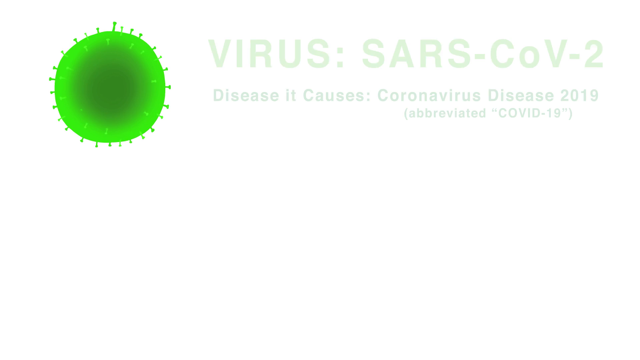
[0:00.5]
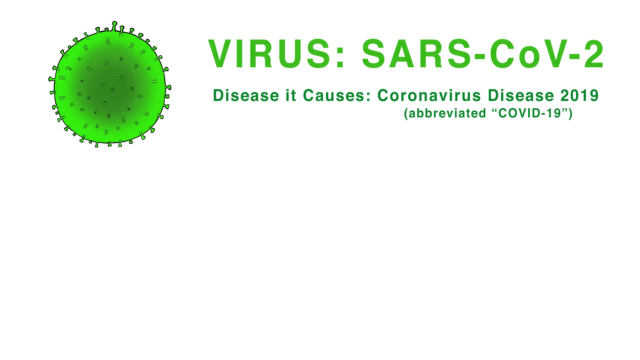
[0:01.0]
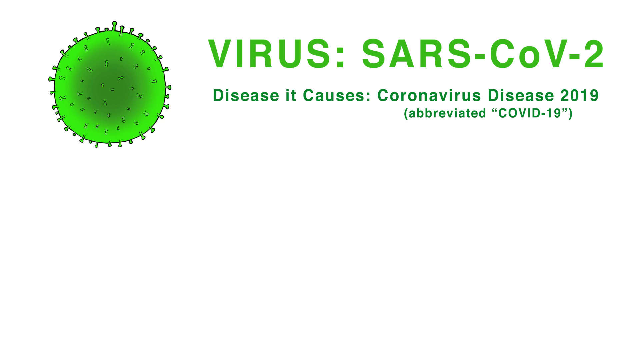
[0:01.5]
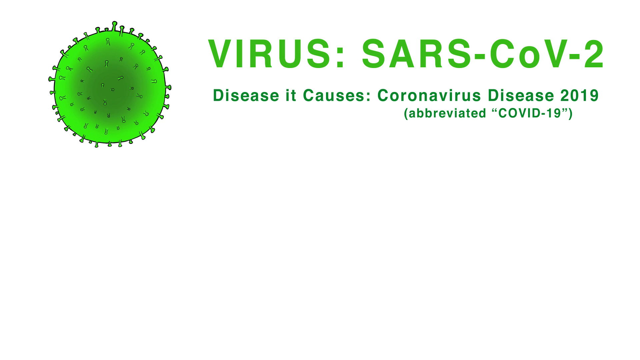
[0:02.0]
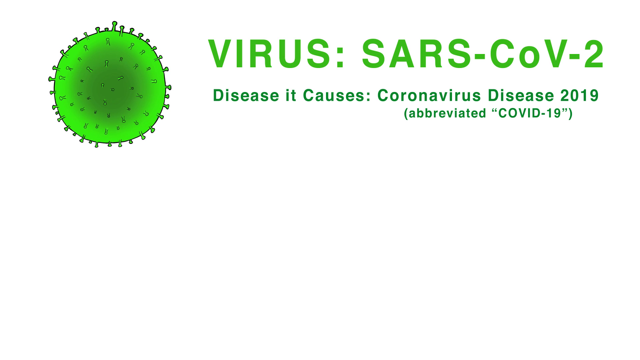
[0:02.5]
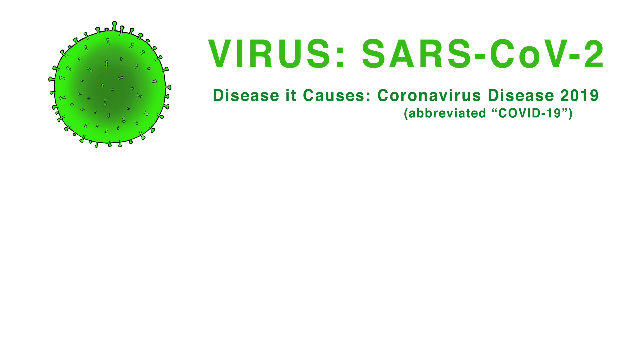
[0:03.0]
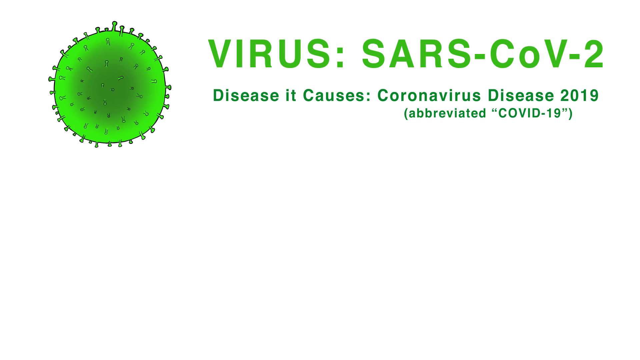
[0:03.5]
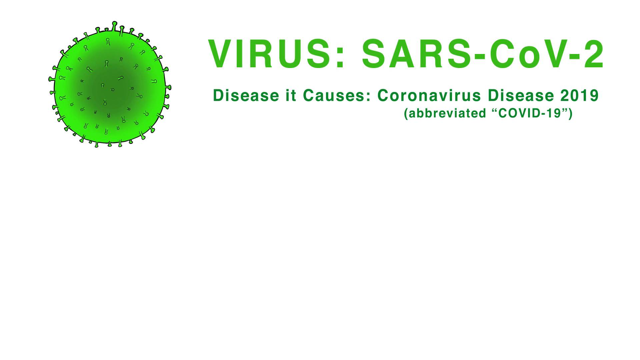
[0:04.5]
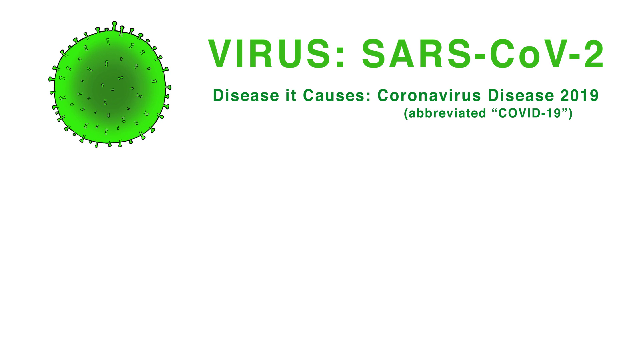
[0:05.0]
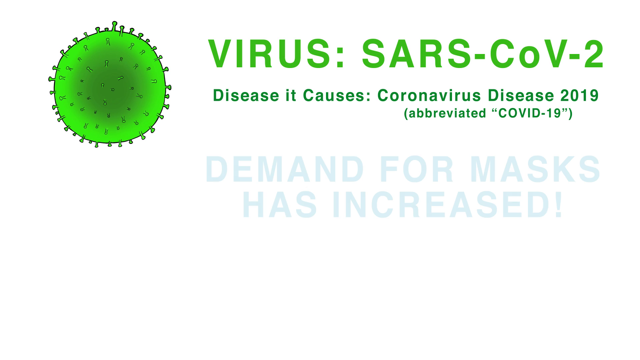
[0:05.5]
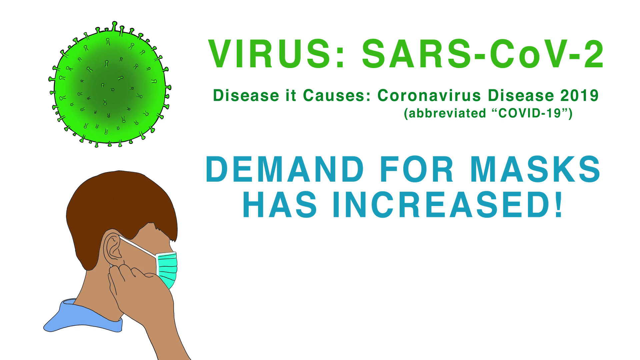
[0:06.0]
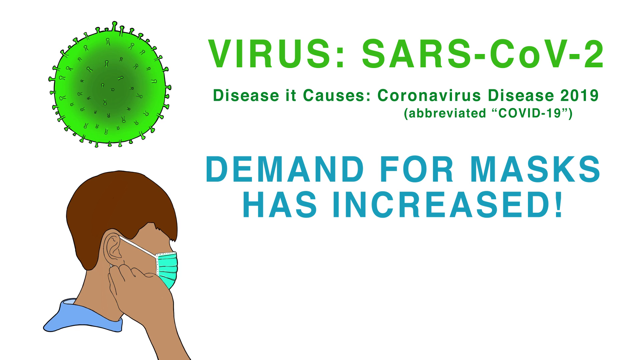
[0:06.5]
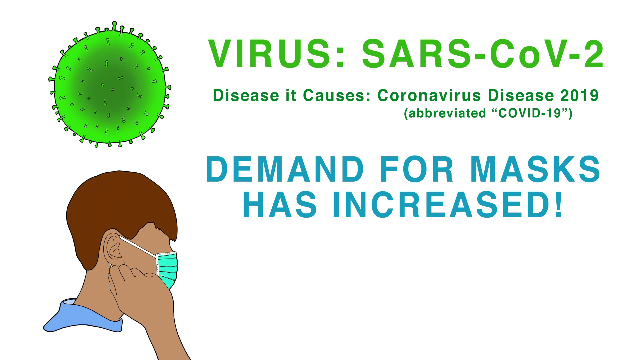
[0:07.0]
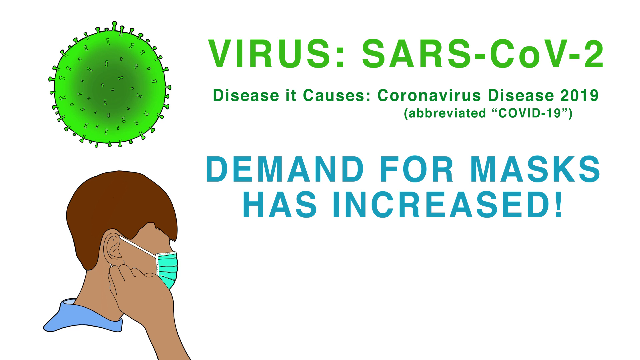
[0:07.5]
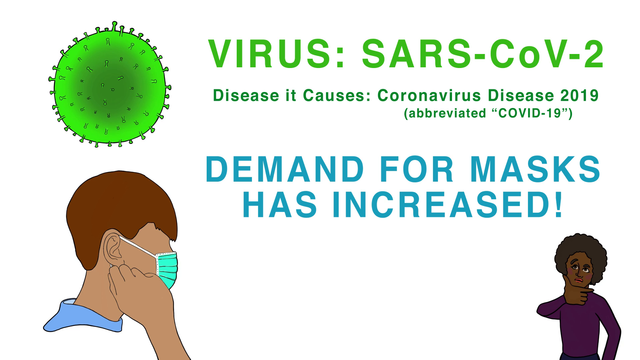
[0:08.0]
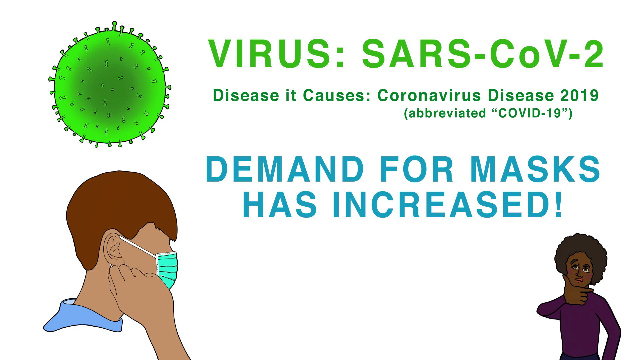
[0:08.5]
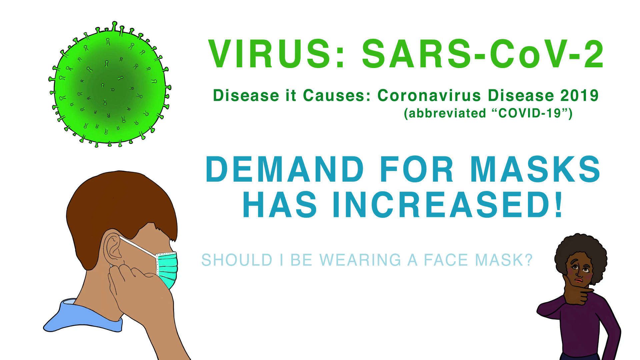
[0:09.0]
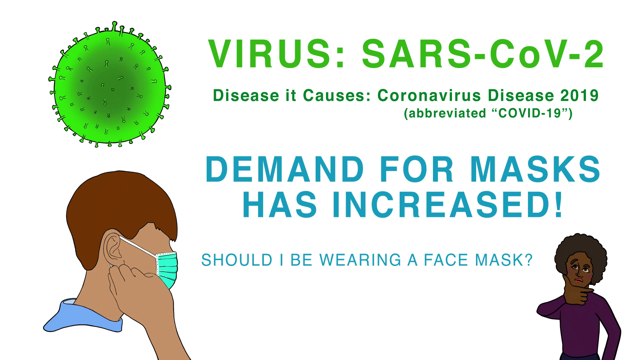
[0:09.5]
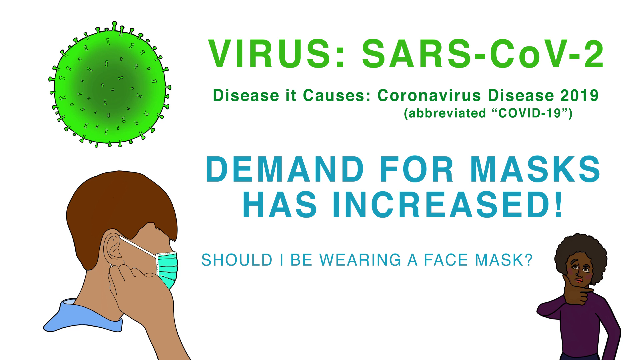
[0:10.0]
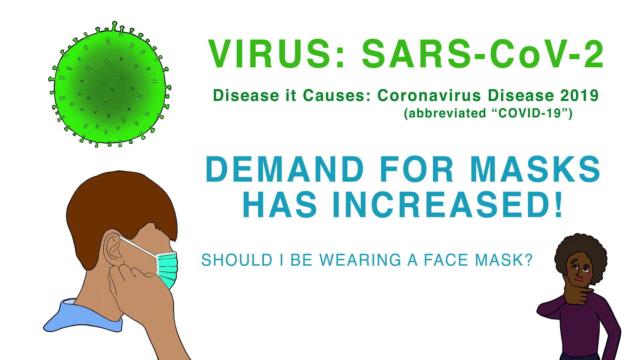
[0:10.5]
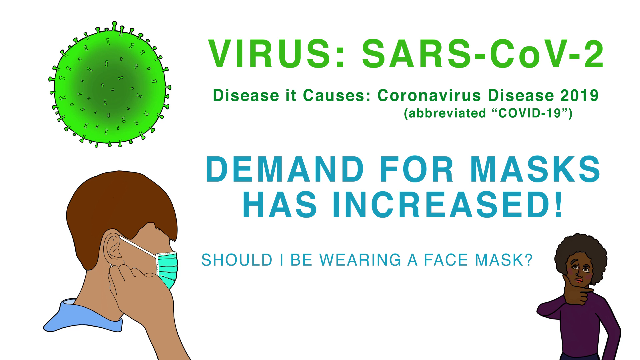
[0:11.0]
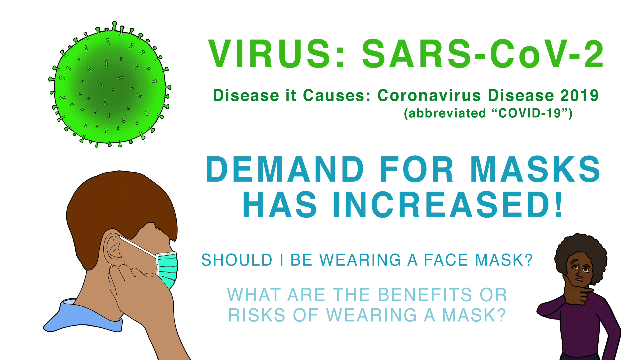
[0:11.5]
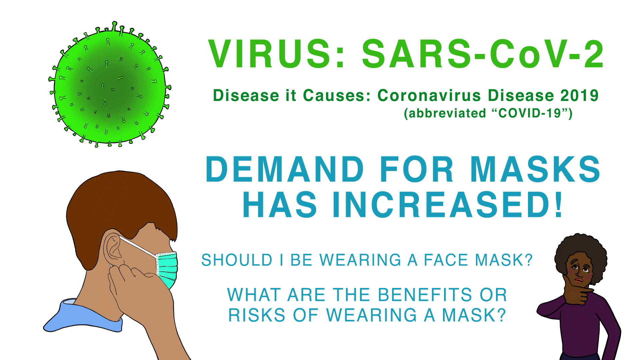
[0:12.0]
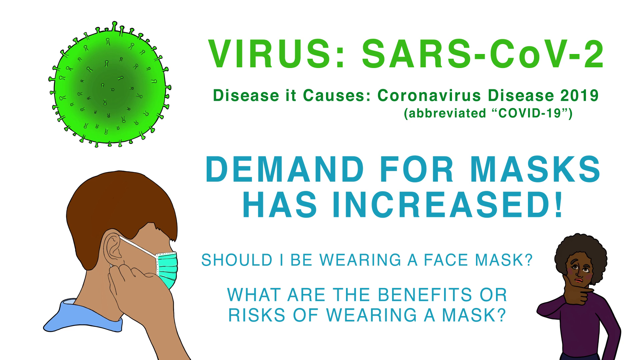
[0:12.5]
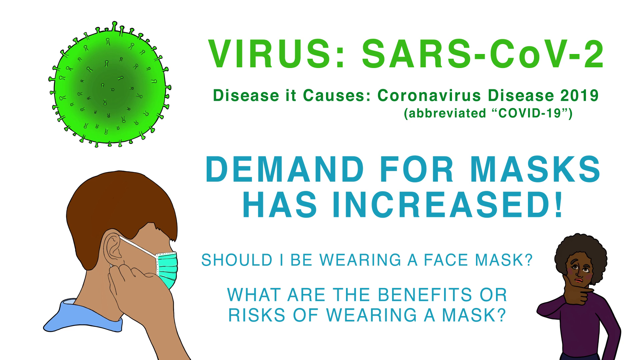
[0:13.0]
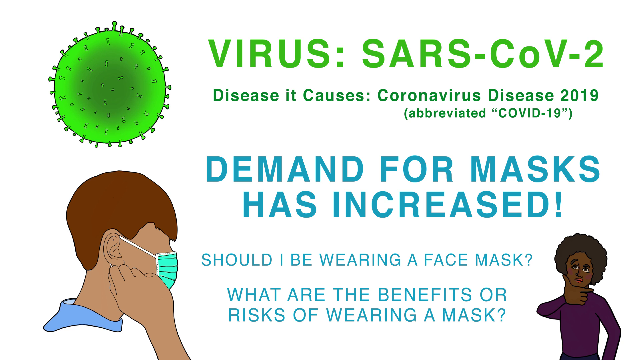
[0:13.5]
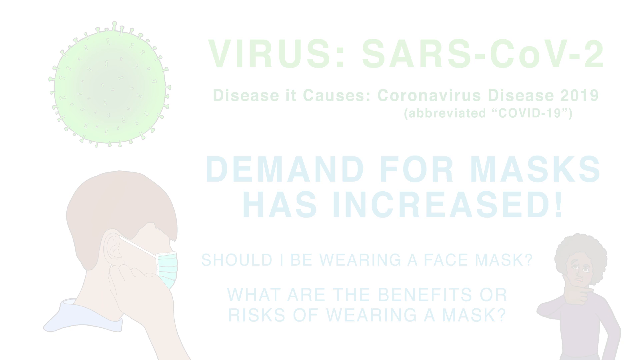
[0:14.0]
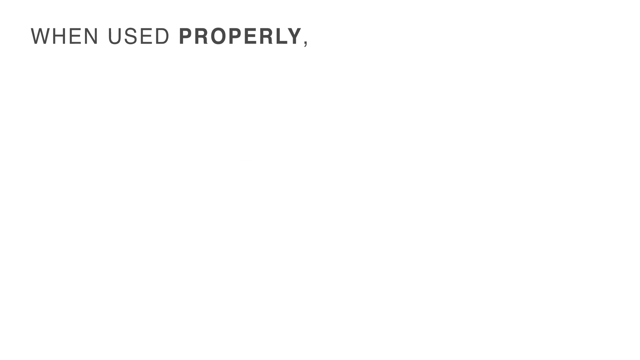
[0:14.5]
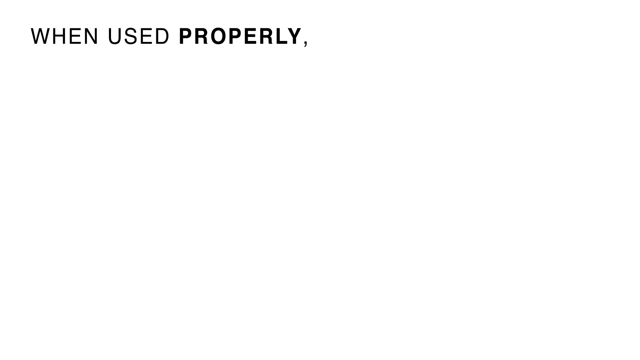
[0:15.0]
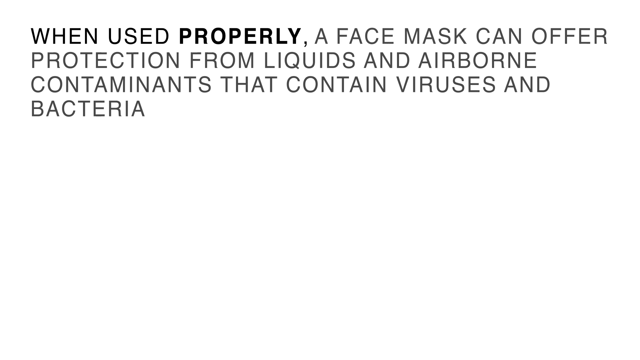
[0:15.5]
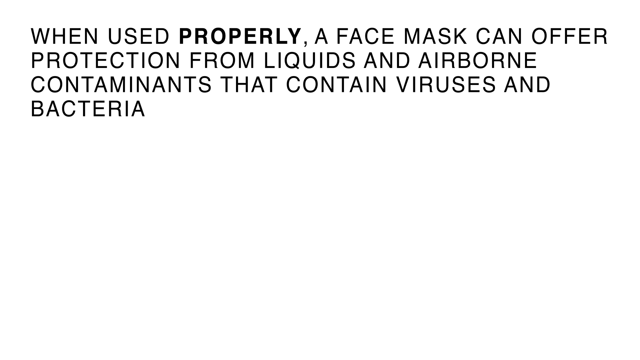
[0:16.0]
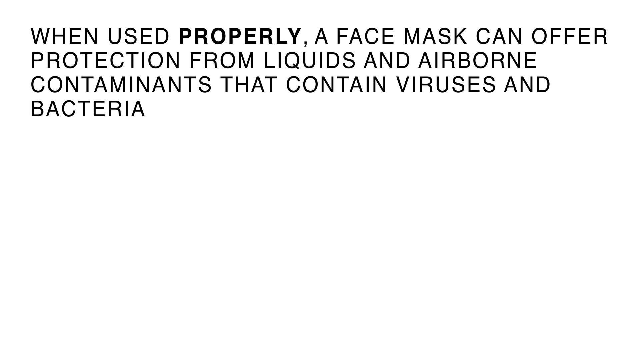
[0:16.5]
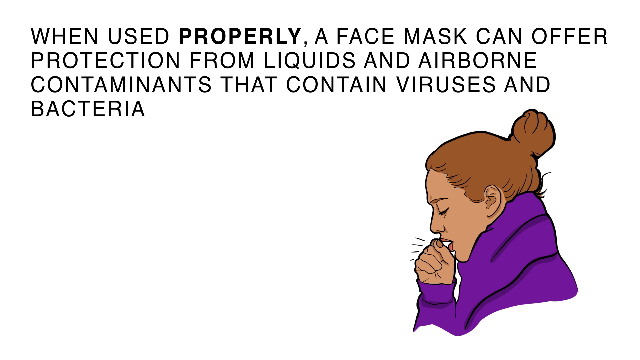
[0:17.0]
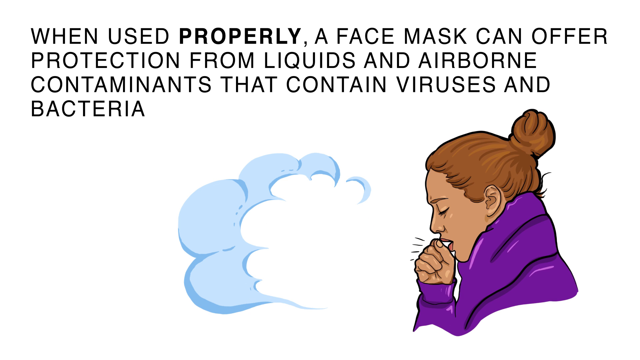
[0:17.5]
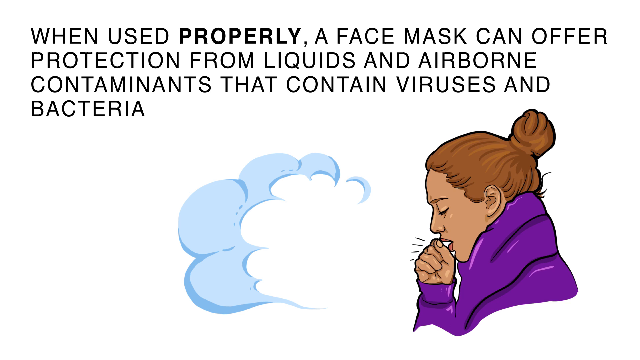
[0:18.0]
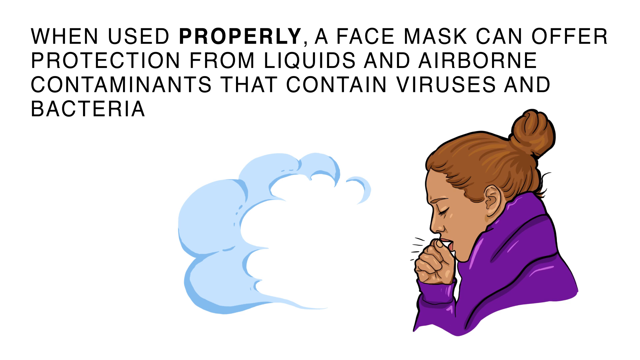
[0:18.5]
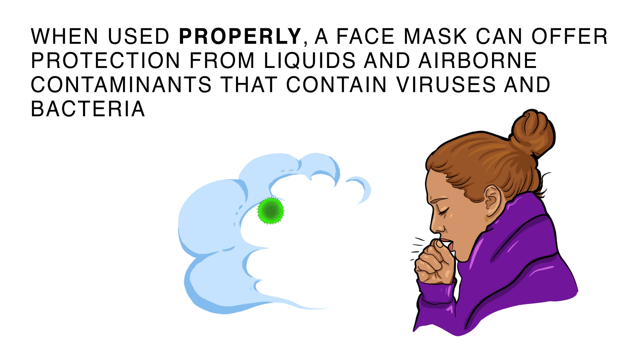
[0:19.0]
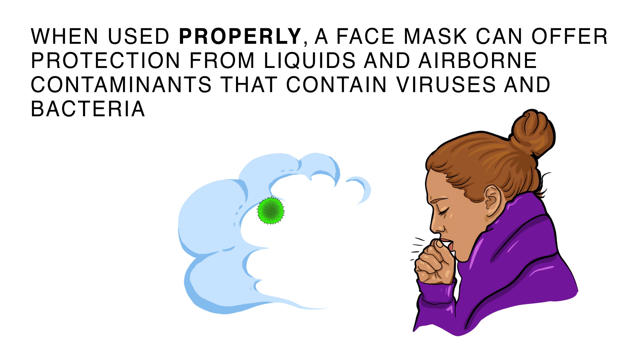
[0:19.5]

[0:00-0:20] The video begins with a white screen, then a green image and green text appear. The image appears to be a germ; it is drawn and circle-shaped. The text reads "Virus SARS-COV-2 Disease it causes Coronavirus disease 2019 Abbreviated COVID-19". Next, blue text and an image appear: the image is a profile of a person with brown hair and light brown skin wearing a medical face mask, and the blue text reads "Demand for masks has increased." Below that, another image and text appear: a dark brown-skinned person with an afro hairstyle has their hand on their chin as if questioning, with text reading "Should I be wearing a face mask?" More blue text below that reads "what are the benefits or risks of wearing a mask?" The video then transitions to a white screen with a paragraph of black text about the proper usage of face masks. Below it is an image of a woman coughing into her right hand, with something, possibly germs, shown leaving her mouth. She wears a puffy garment, kind of a purple sweater.